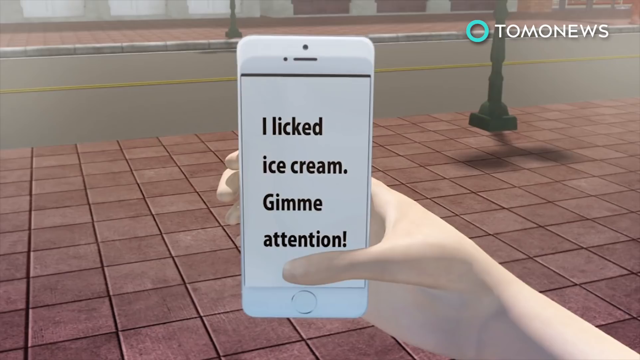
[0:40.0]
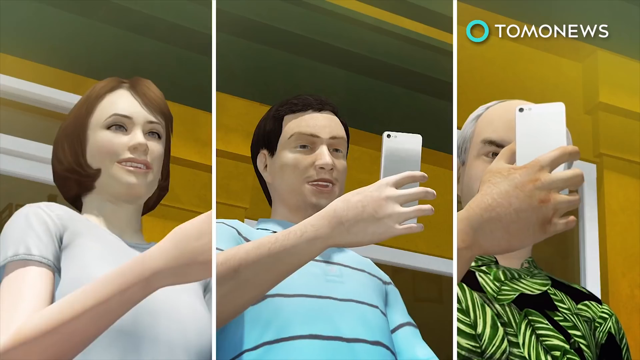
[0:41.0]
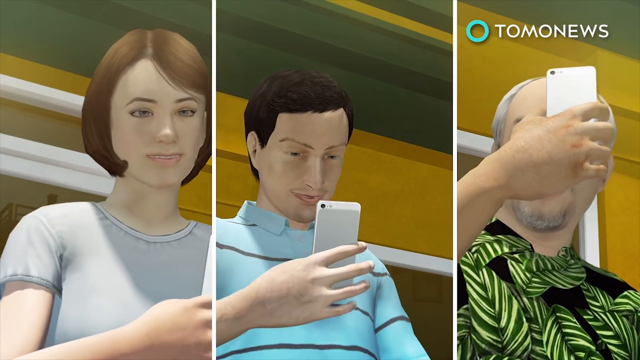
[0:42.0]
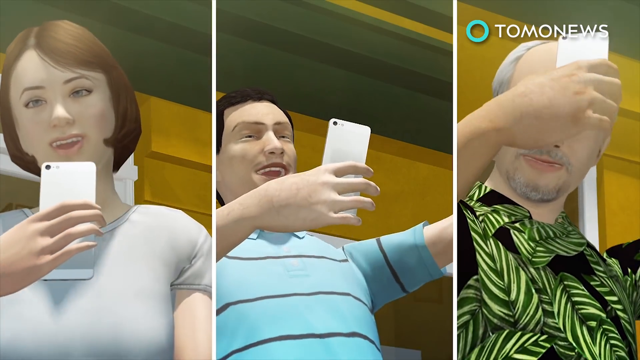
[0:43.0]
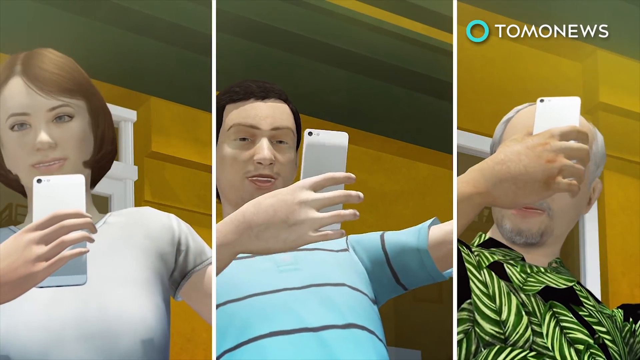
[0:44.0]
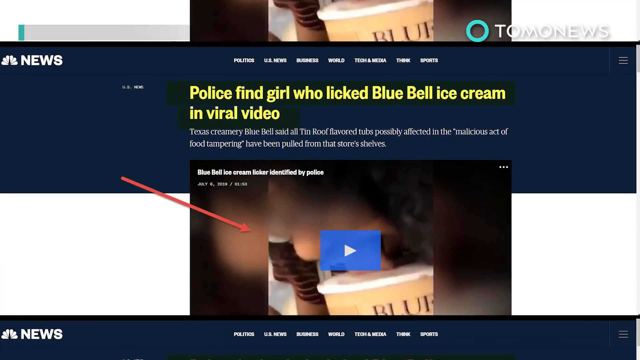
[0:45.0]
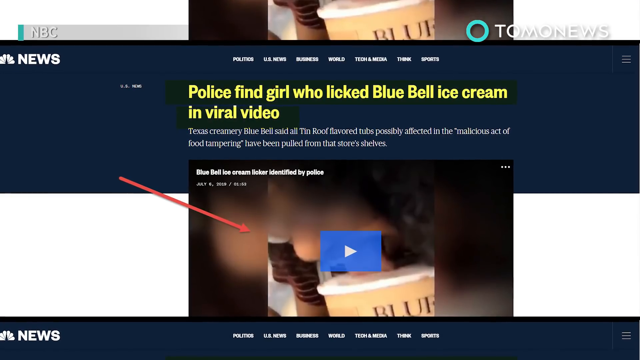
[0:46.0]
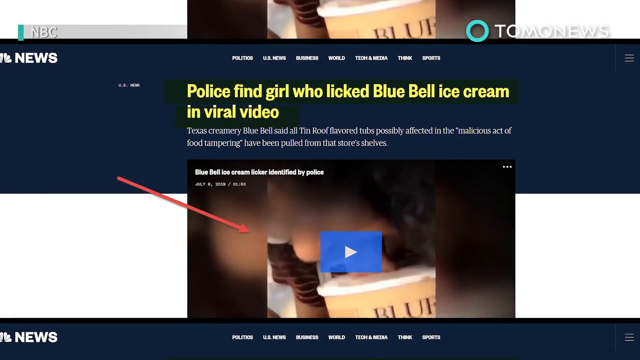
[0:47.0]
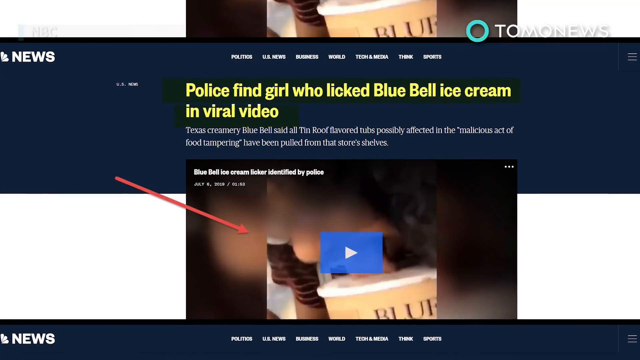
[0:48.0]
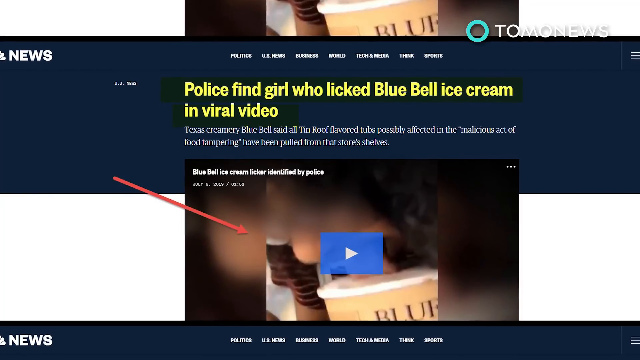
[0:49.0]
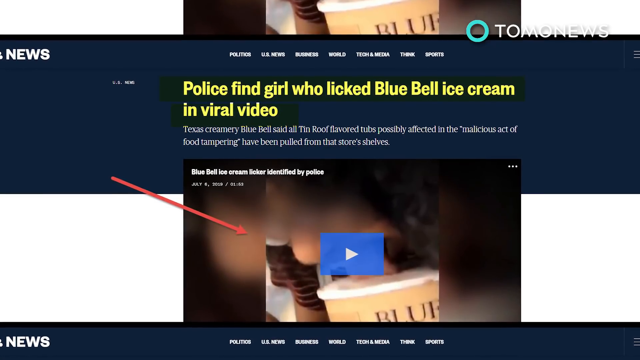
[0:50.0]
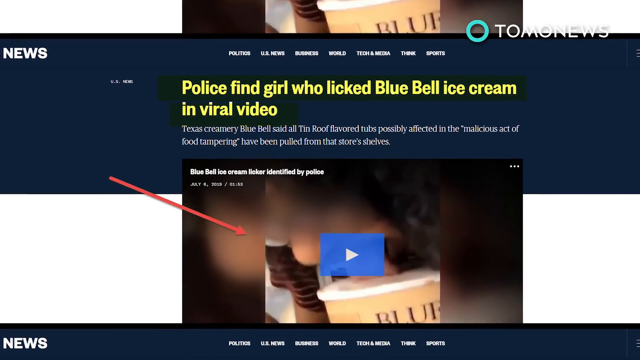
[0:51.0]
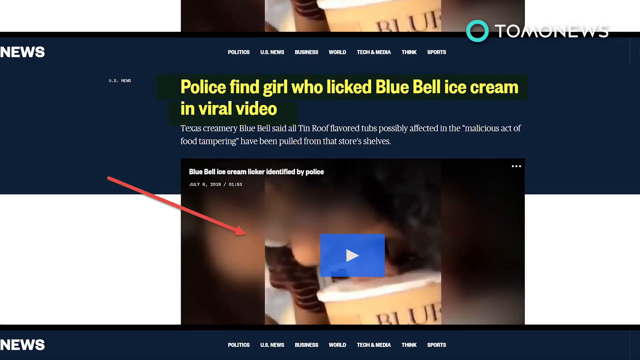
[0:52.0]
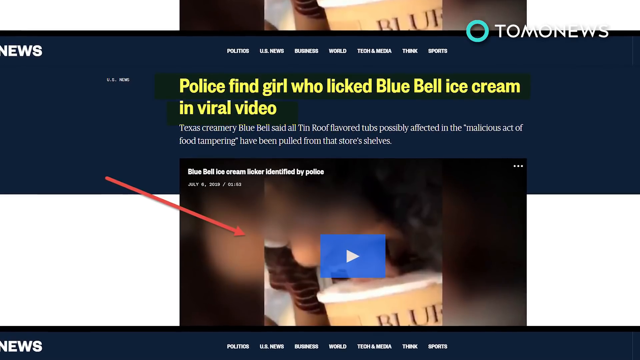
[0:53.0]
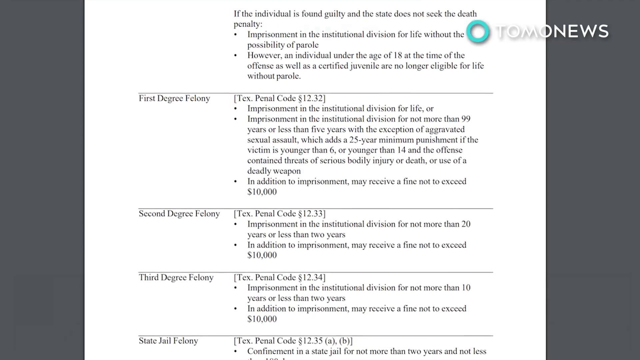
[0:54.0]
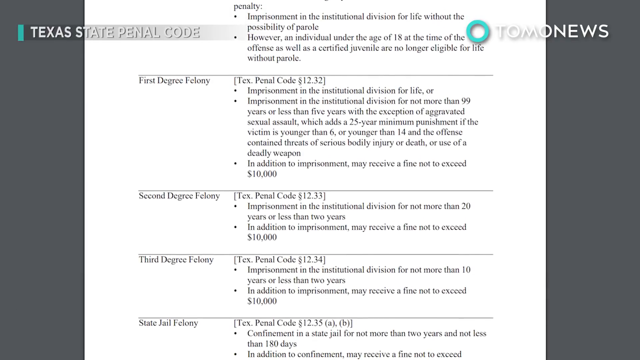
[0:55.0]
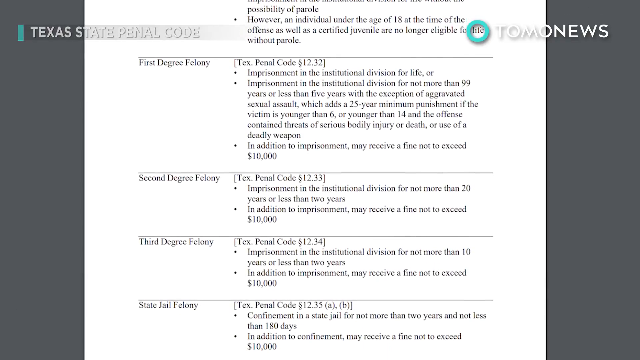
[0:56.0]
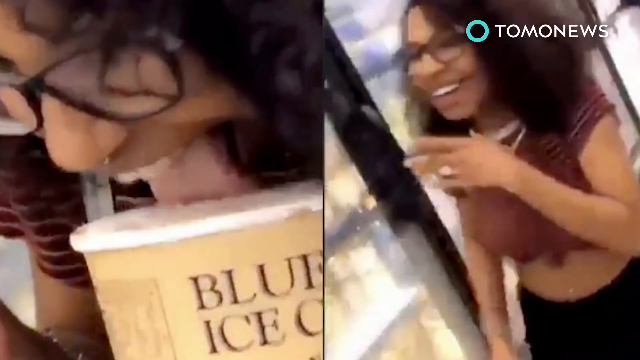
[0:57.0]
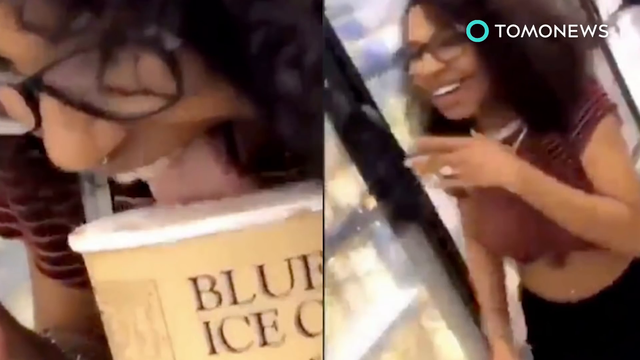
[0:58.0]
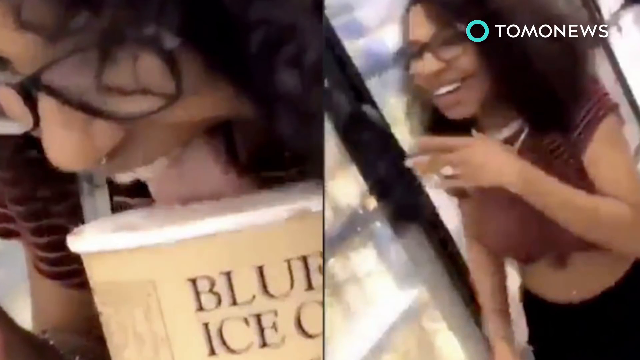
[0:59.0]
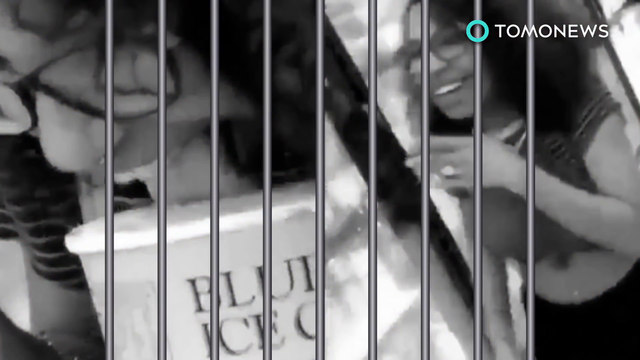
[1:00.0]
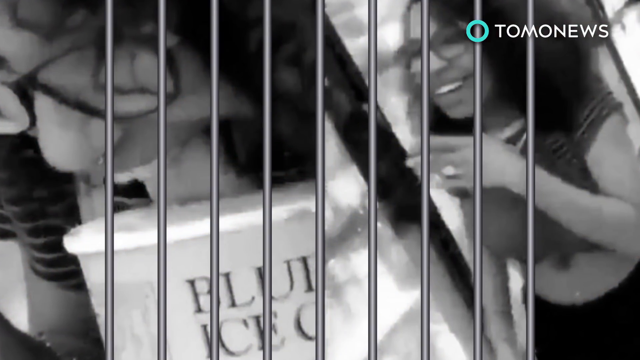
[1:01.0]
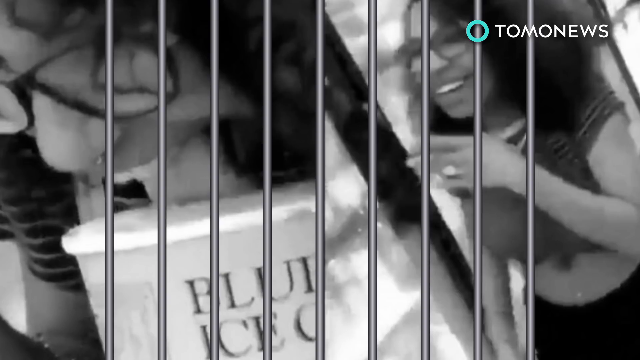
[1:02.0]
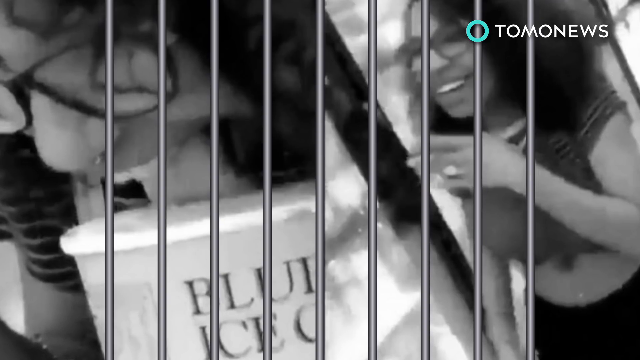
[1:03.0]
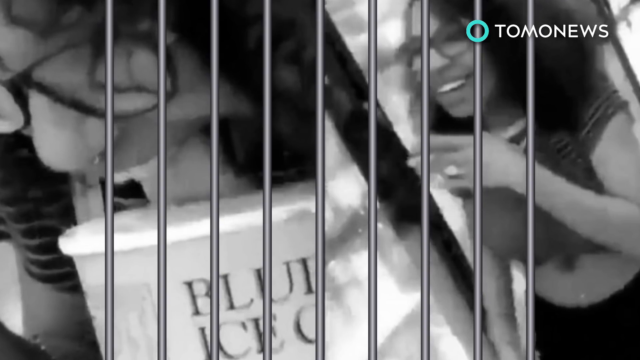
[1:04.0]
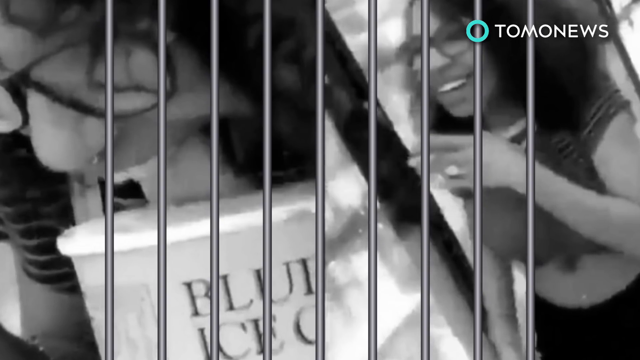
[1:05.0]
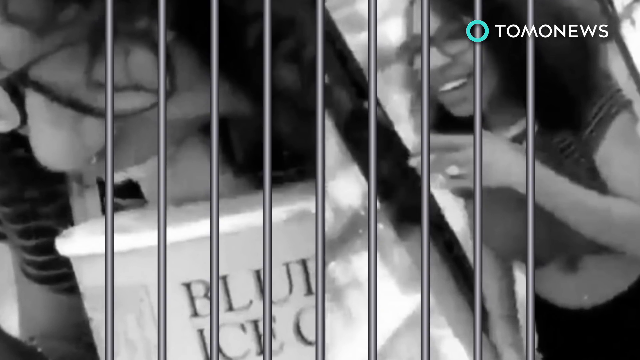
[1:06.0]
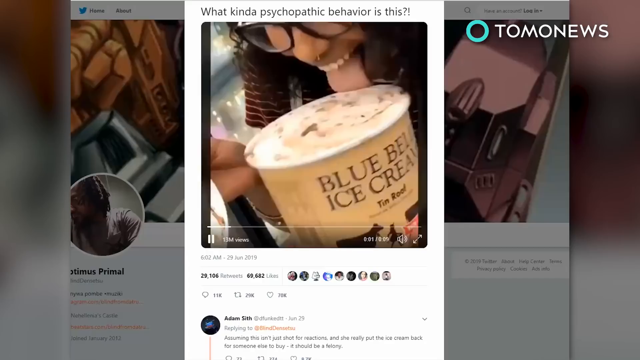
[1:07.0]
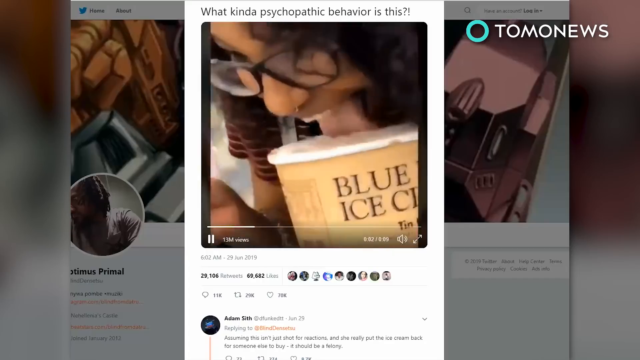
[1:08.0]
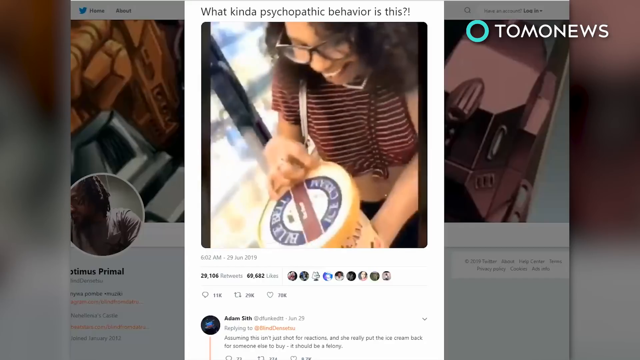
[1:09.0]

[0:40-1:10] Three cartoon characters are watching something, seemingly text that says "I need ice cream attention," and appear to be having fun. A video of the lady licking ice cream appears to be going viral. A headline says "police find the girl who licked the ice cream in a viral video," and there is a page showing a trending video about the girl. The girl appears to wear a ring on her finger, and she is then shown behind bars, in jail.